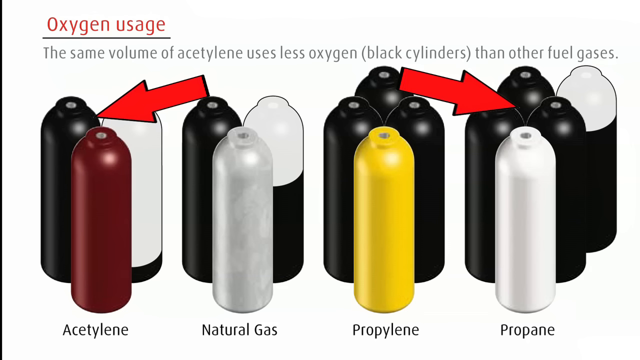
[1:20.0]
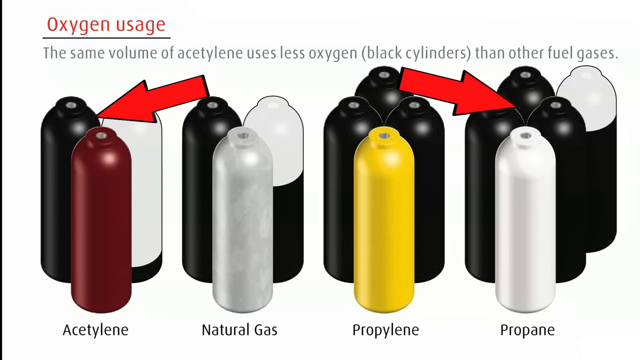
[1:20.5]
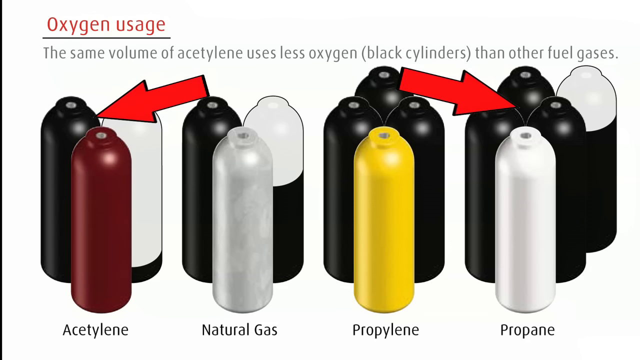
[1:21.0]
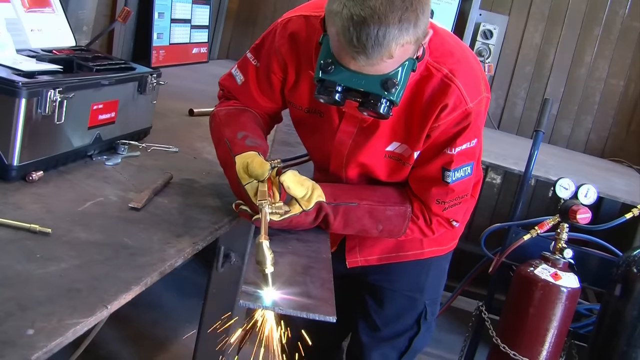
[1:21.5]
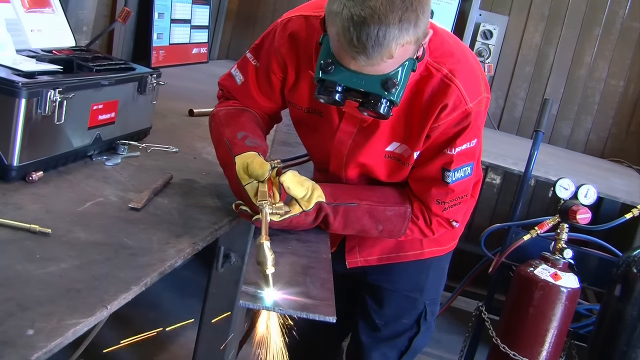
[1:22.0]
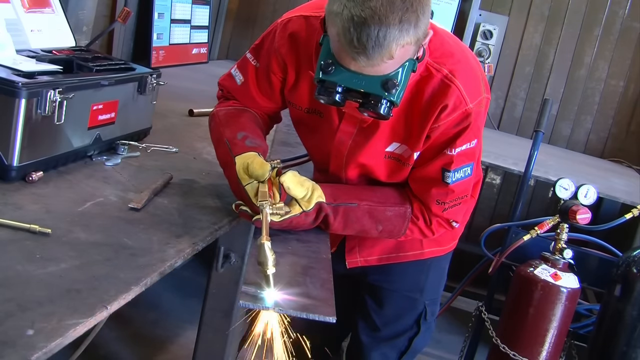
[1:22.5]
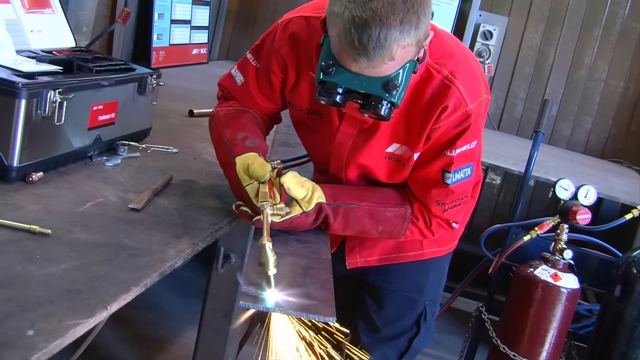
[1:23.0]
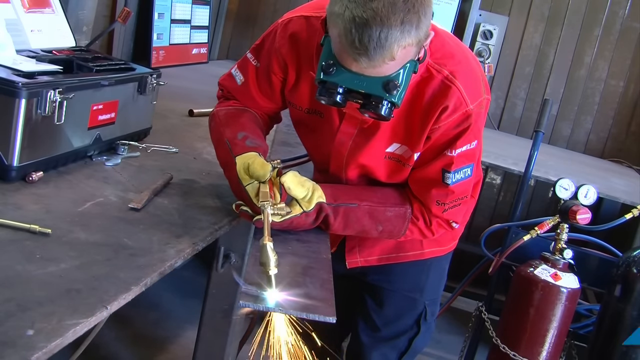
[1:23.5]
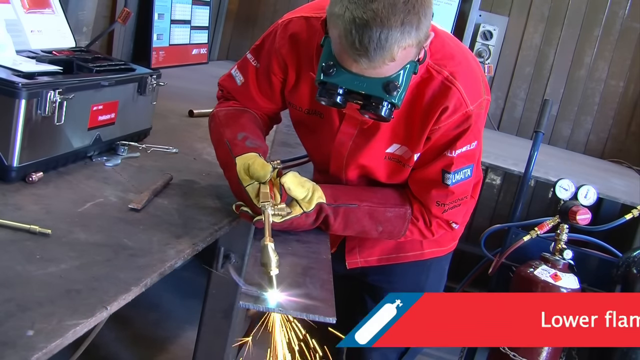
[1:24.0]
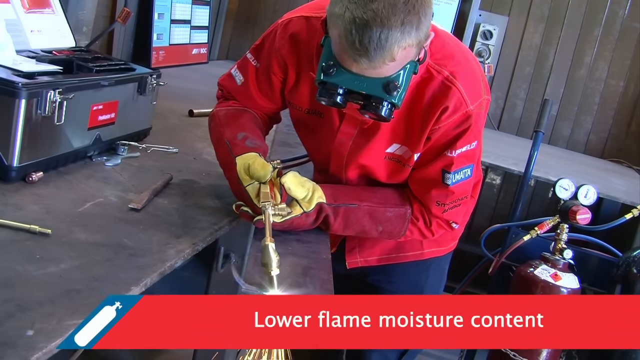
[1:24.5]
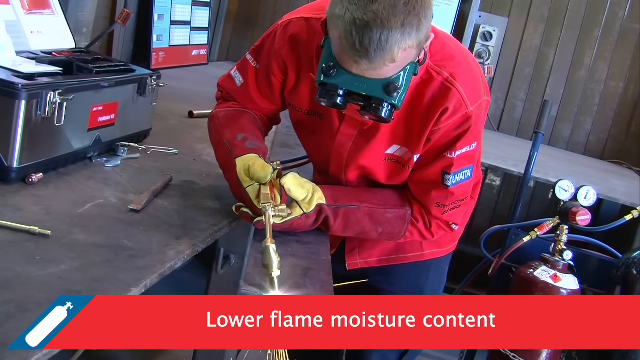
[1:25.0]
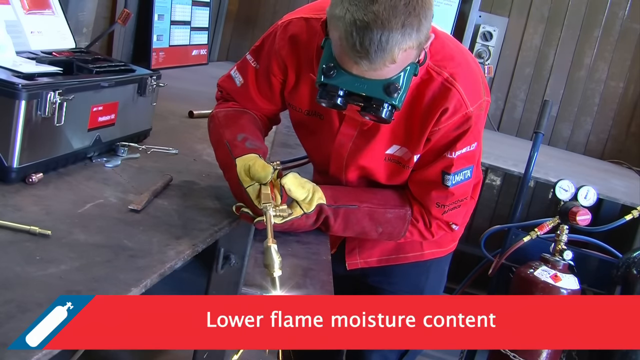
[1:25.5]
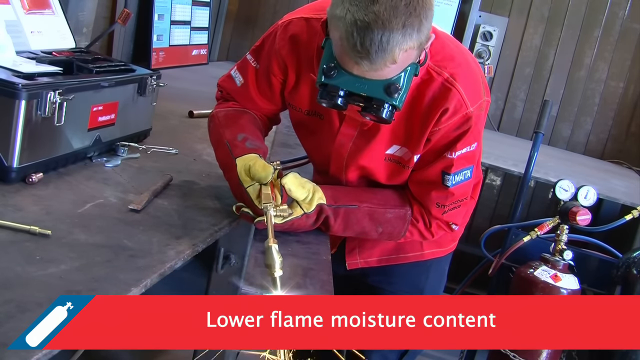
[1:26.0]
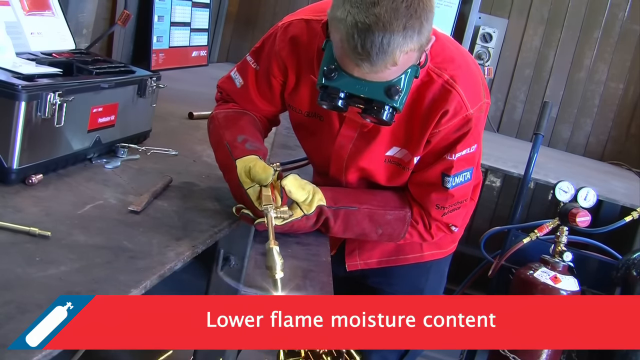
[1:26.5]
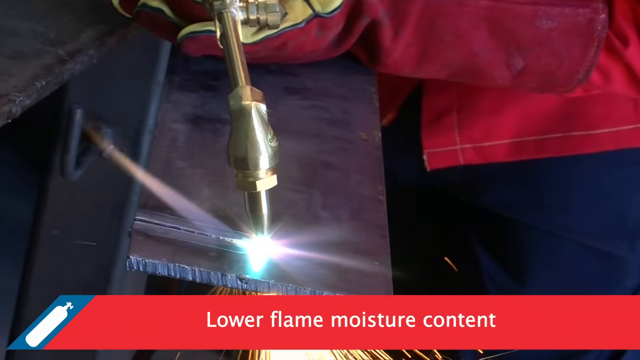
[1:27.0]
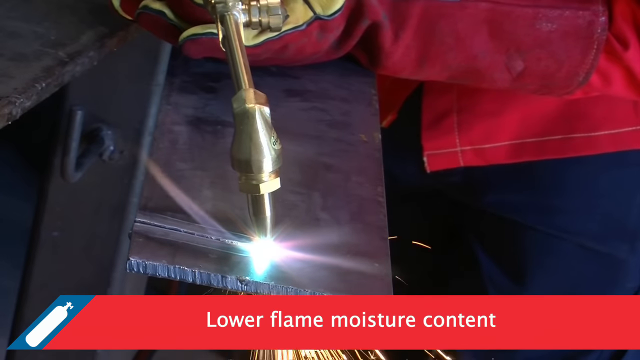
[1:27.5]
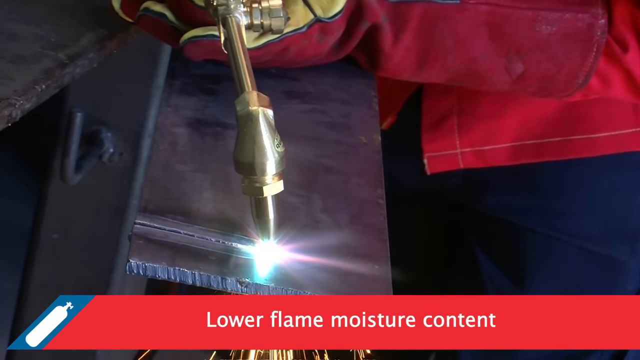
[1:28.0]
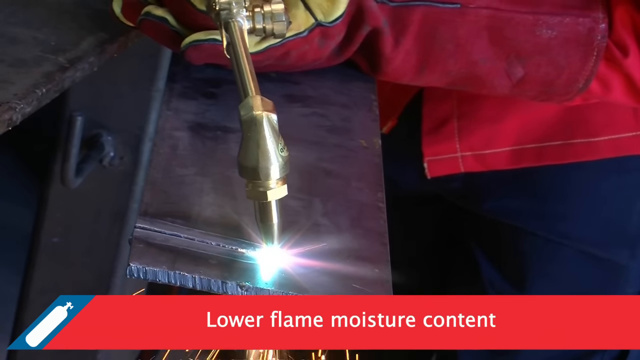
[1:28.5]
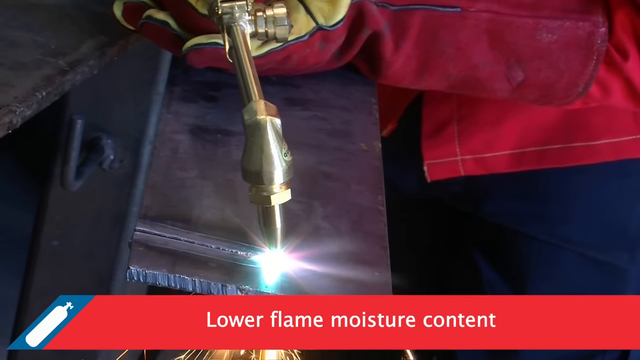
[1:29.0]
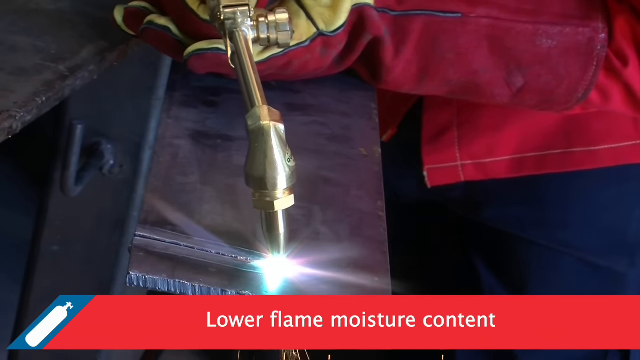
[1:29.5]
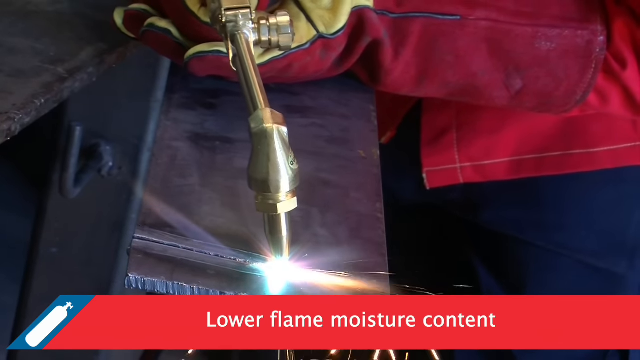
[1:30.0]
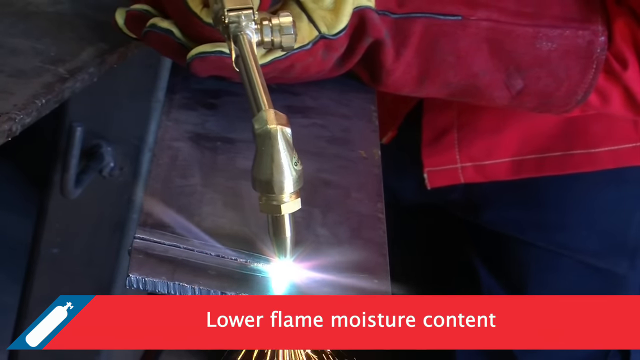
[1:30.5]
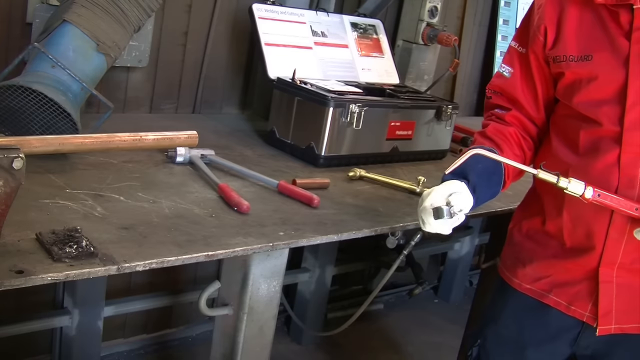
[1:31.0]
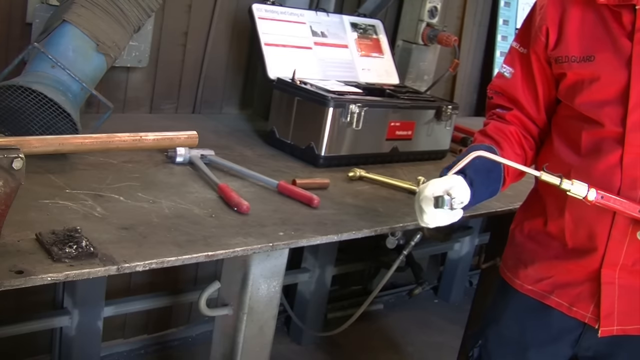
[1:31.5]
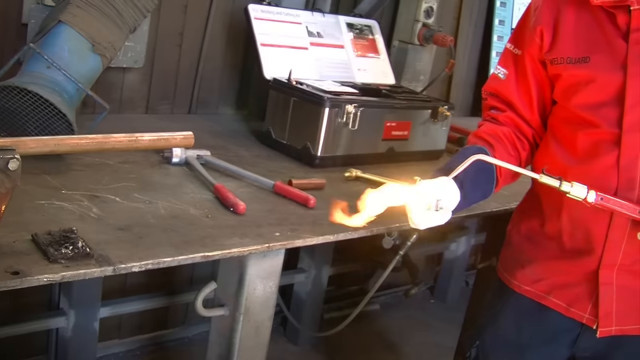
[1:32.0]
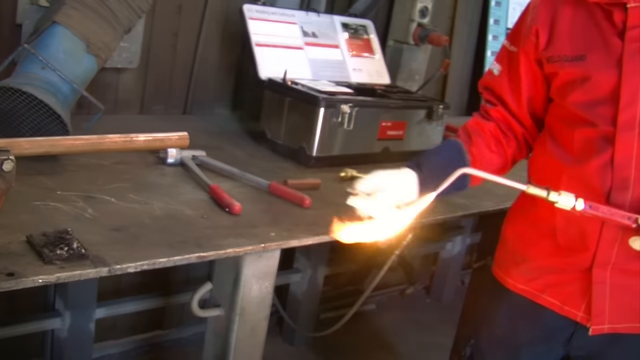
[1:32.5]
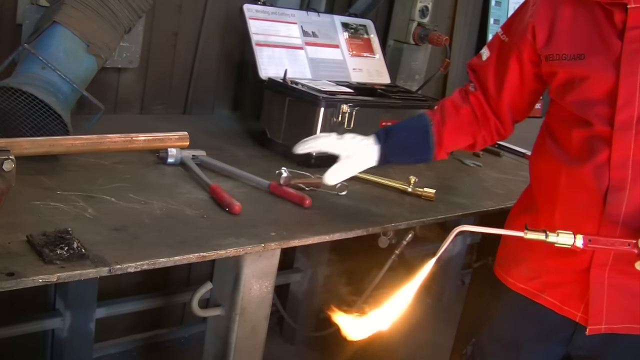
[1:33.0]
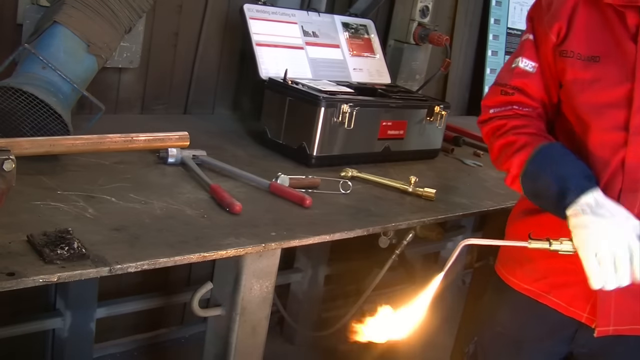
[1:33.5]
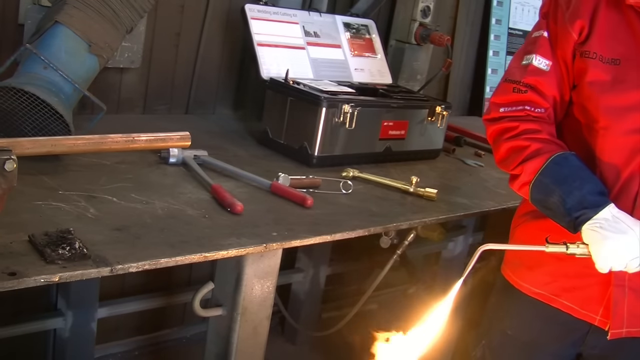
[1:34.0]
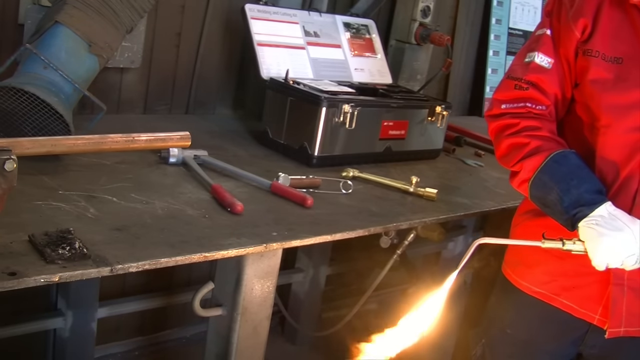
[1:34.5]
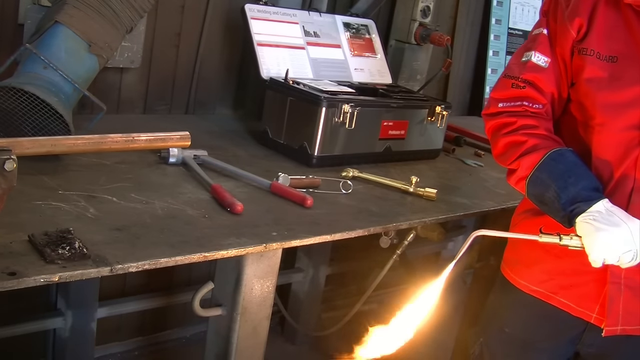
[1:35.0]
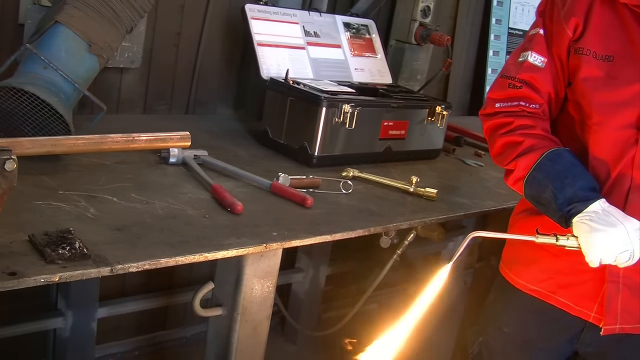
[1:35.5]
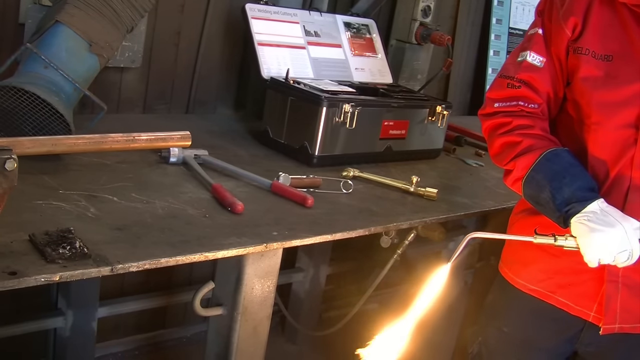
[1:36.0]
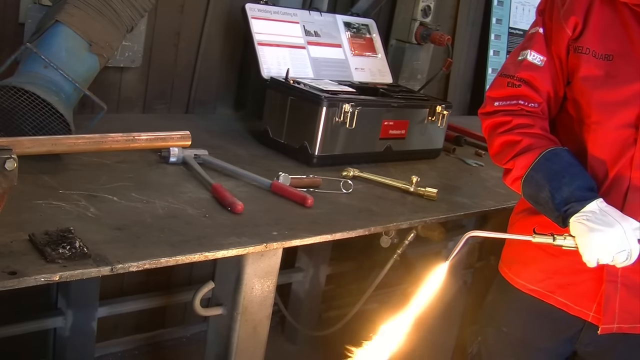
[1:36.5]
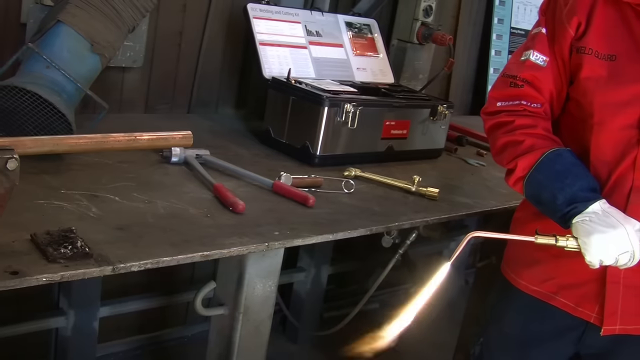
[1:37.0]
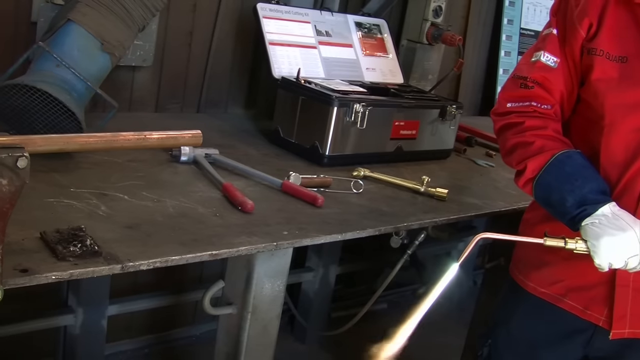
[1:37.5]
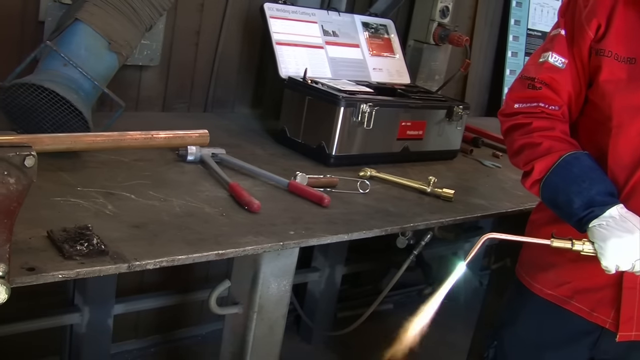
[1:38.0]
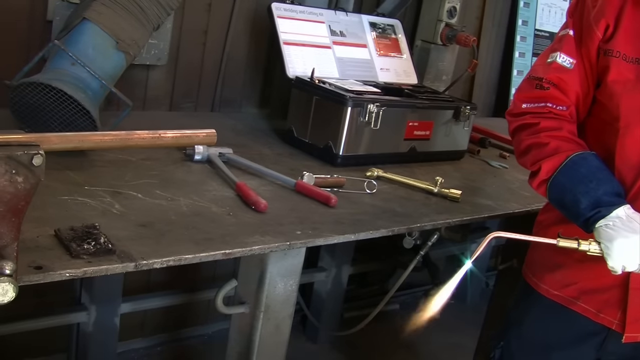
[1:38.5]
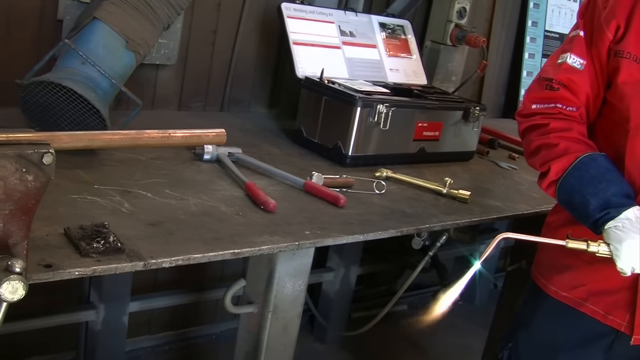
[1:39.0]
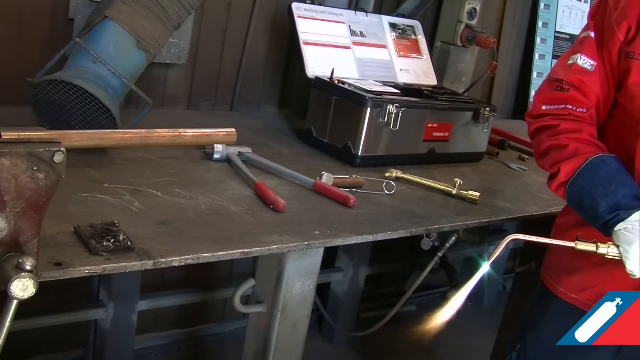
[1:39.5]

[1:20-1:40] Four groups of cylinders are shown, with black and white cylinders in the background. The first group on the left has a burgundy cylinder in front, the next has a silver cylinder in front, the third has a yellow cylinder in front, and the fourth has a white cylinder in front. Next, a man wearing safety goggles uses the torch inside a room with equipment all around him, and text reads "lower flame moisture content." A close-up shows him carefully using the torch. Another shot shows him holding the torch with everything on the table visible; he appears to be lowering the flame. Multiple pieces of equipment are on the table in front of him and to the right, and there is an electrical box on the wall.